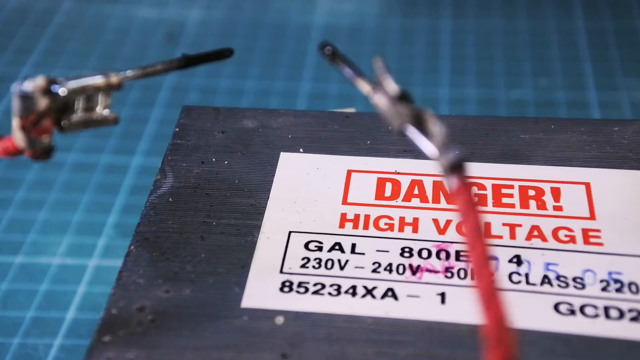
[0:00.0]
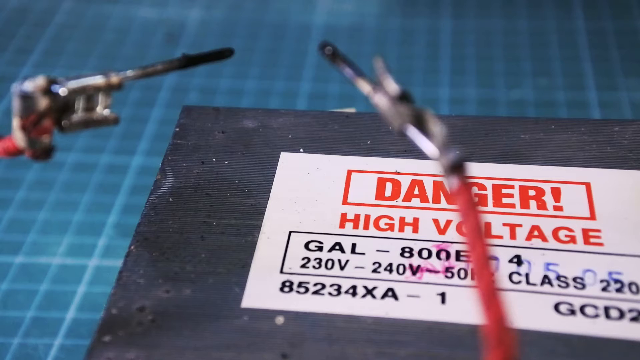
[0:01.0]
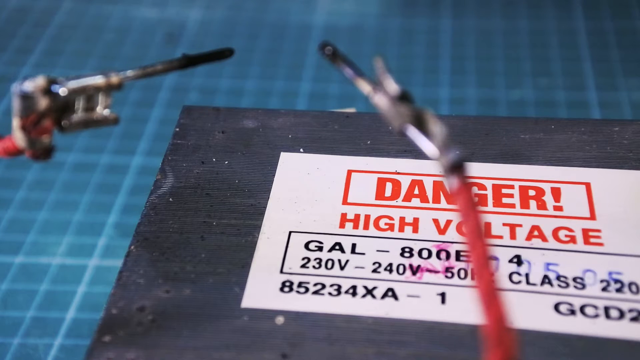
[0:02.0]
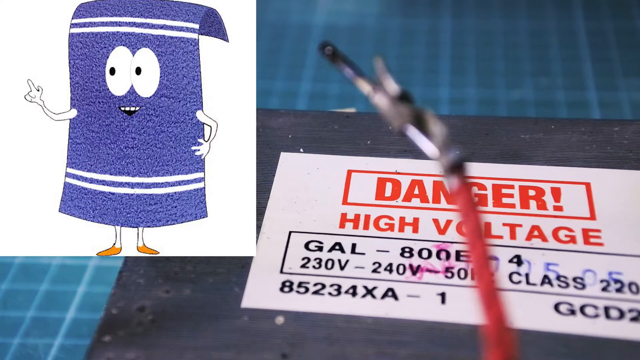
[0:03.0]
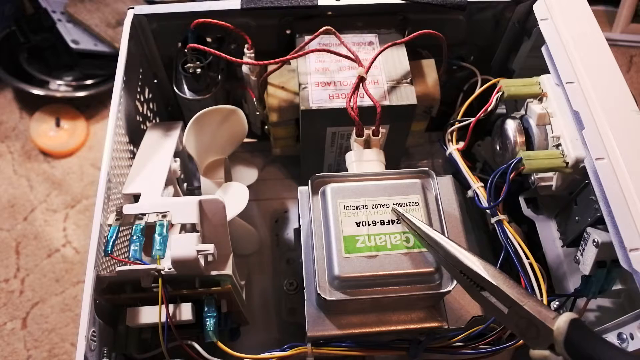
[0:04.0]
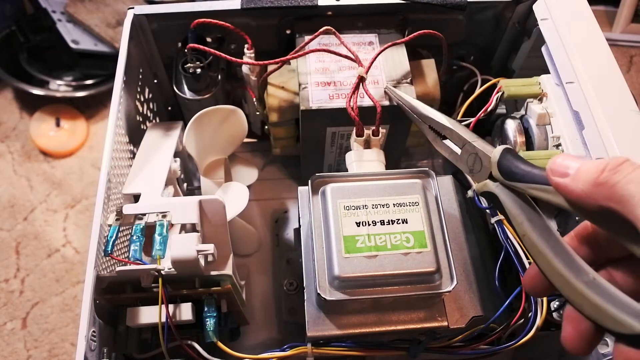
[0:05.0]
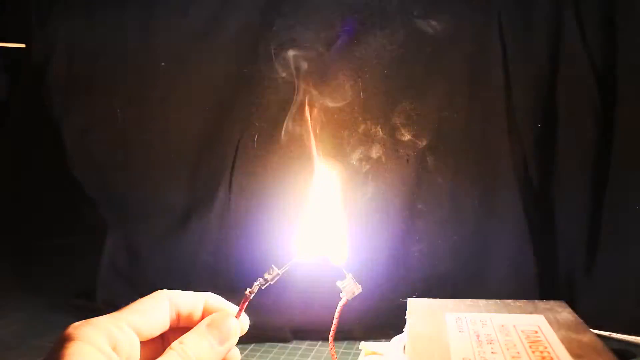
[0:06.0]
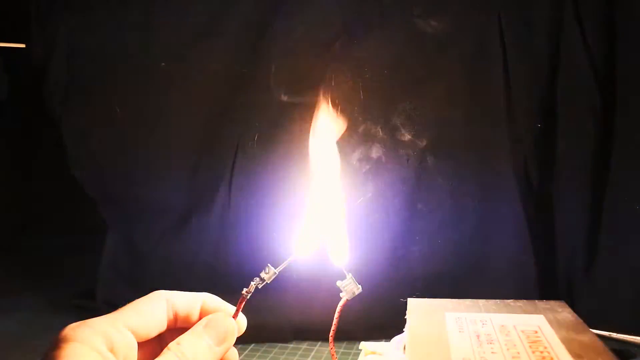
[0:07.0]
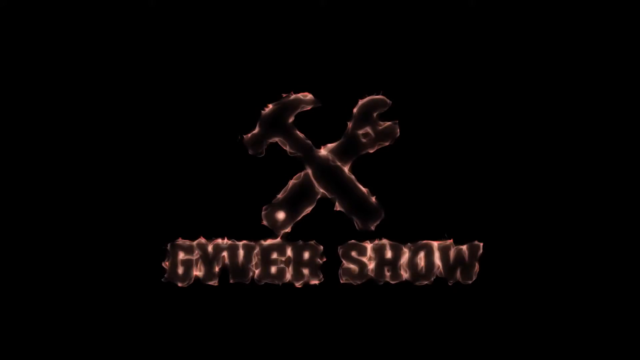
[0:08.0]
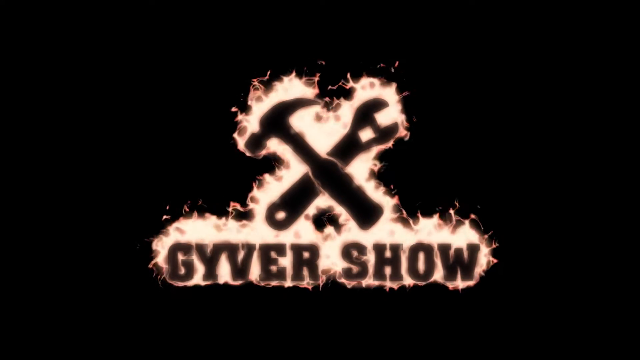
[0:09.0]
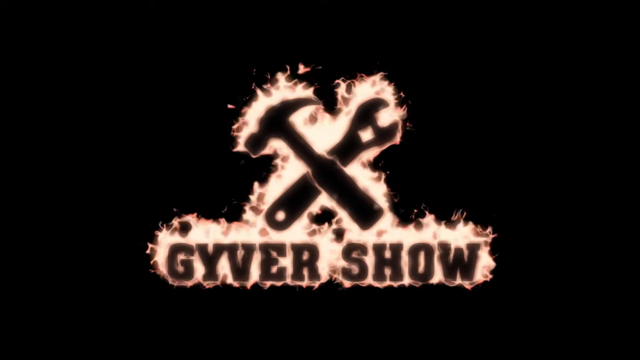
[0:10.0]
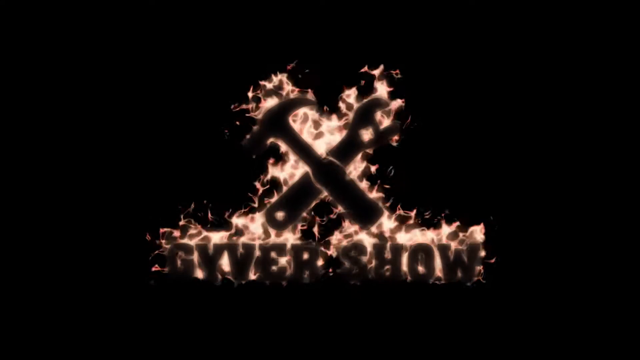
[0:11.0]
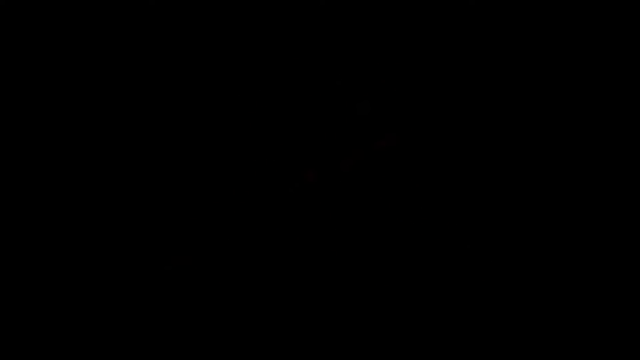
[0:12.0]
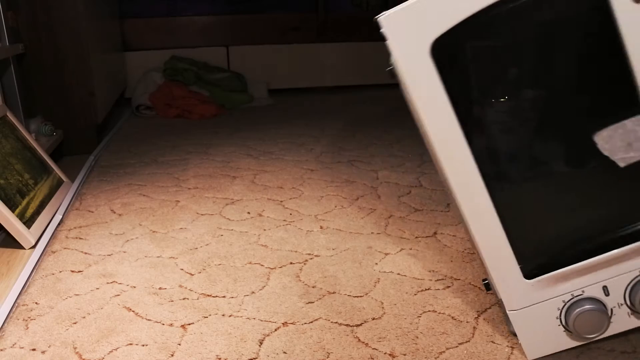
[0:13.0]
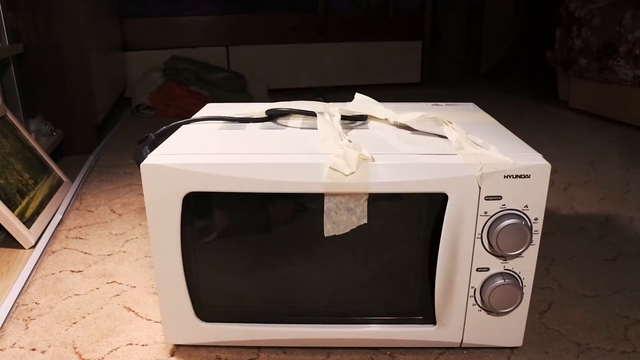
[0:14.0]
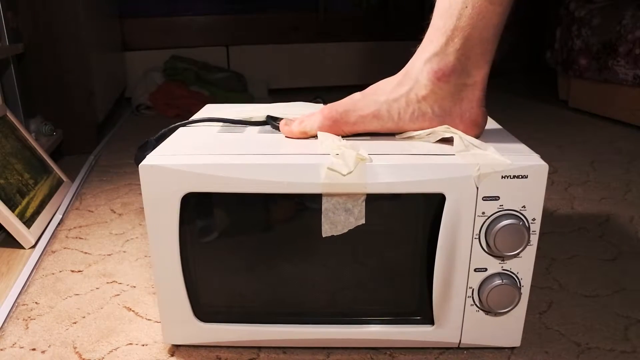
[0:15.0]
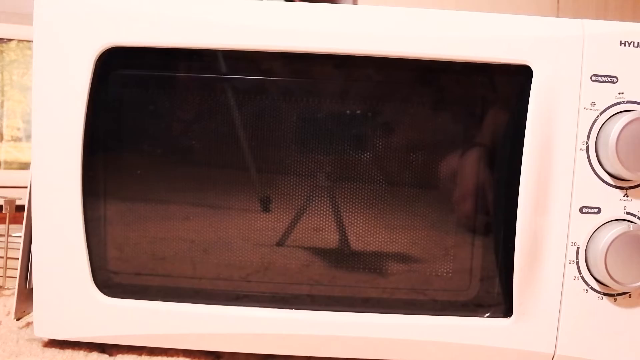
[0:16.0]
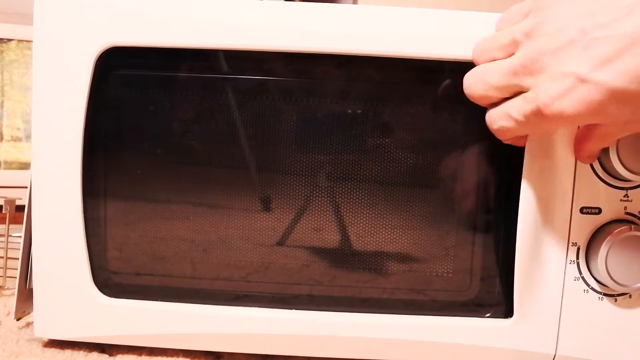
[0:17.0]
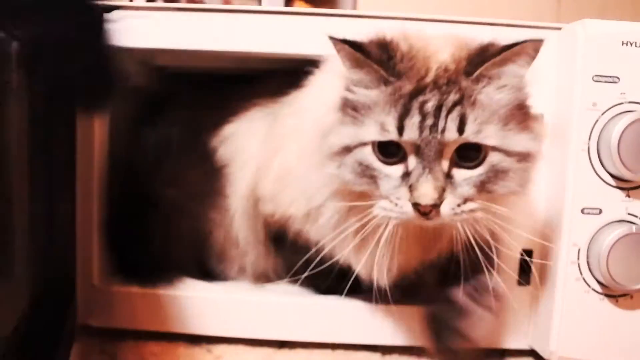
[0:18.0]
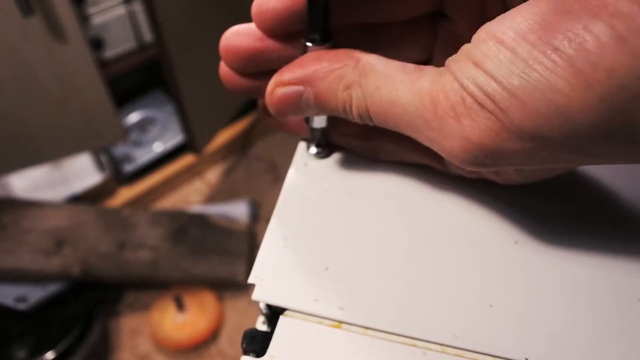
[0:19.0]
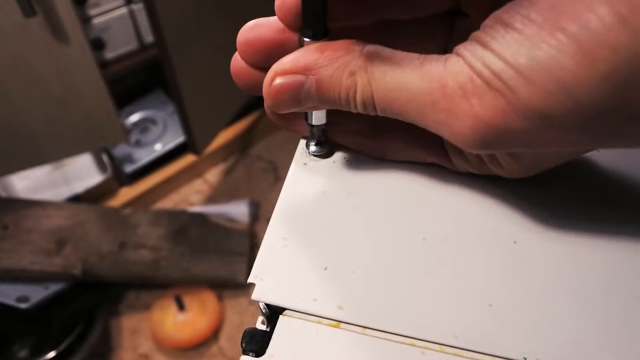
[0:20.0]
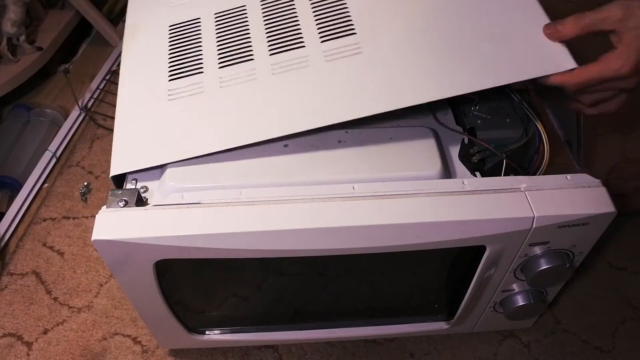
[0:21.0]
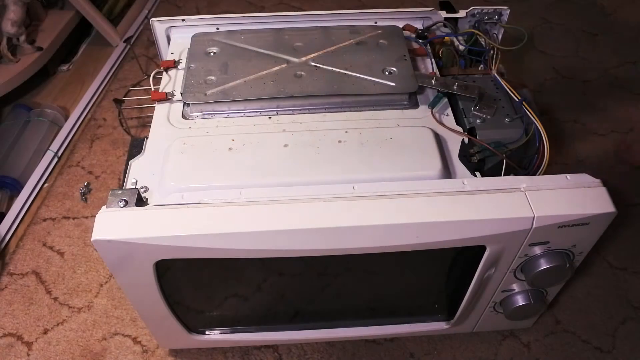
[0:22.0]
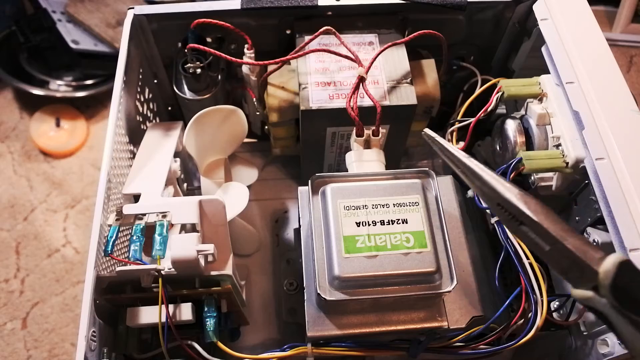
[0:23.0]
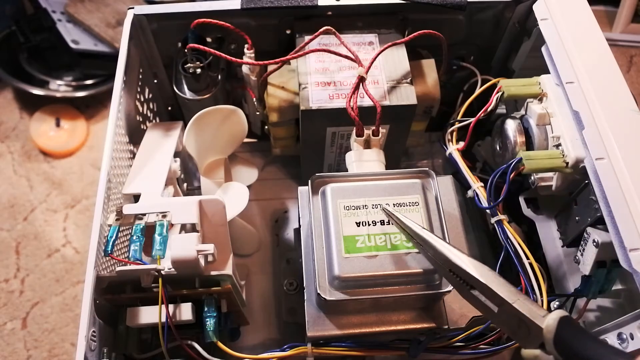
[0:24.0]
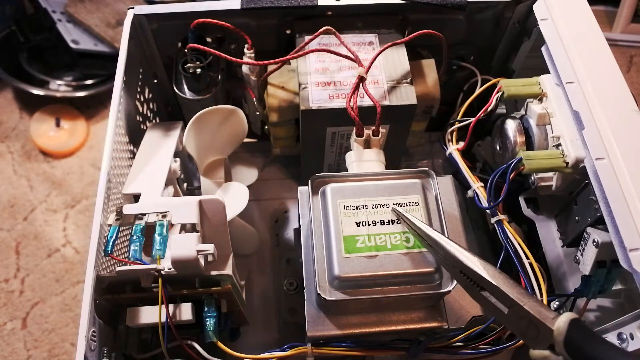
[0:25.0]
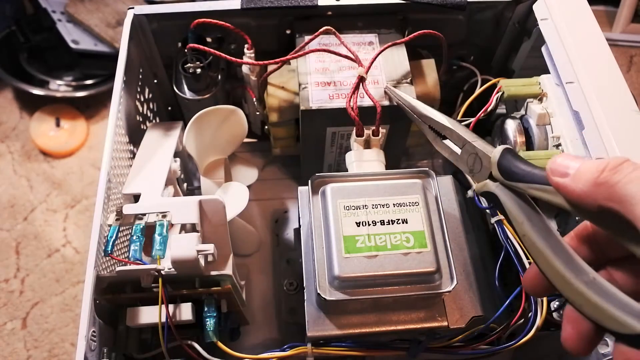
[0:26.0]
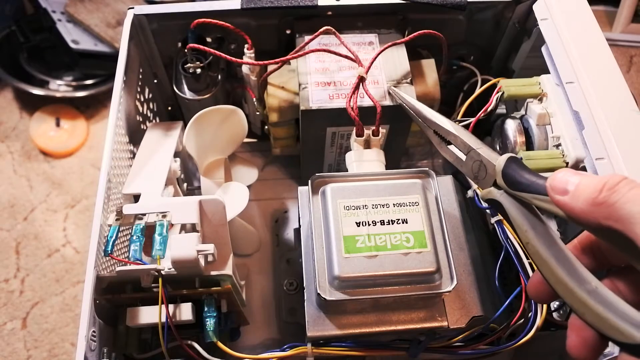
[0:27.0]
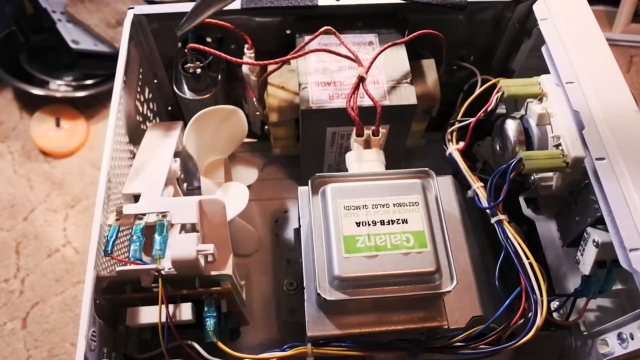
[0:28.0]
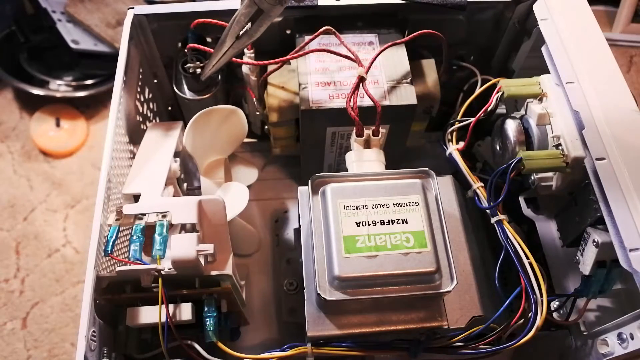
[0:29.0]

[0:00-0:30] What looks like a battery appears, possibly being welded, and it seems to be set on fire, though what is happening is not clear. A microwave has someone's foot on top of it. Someone opens the microwave door and a cat runs out. A man takes the microwave apart by unscrewing some screws and appears to go toward the power source, and high voltage in this battery is shown. It seems that repairs are going to be made to the microwave, possibly to the power supply.